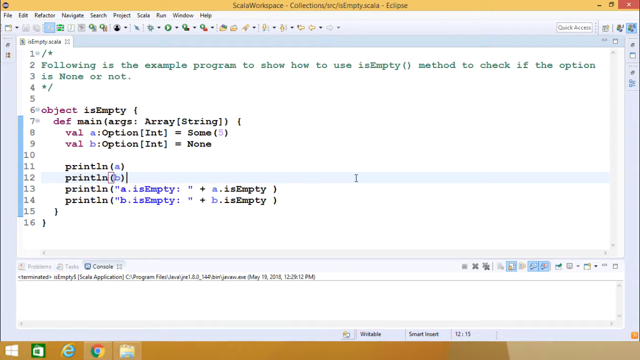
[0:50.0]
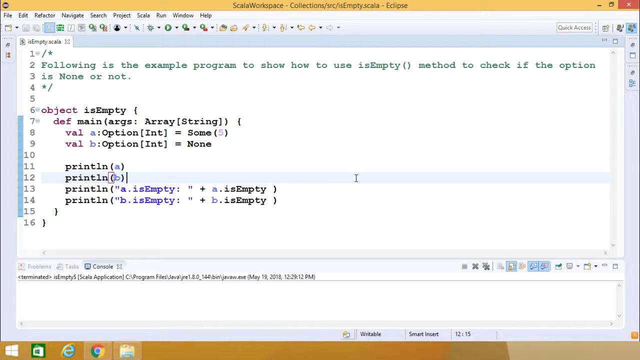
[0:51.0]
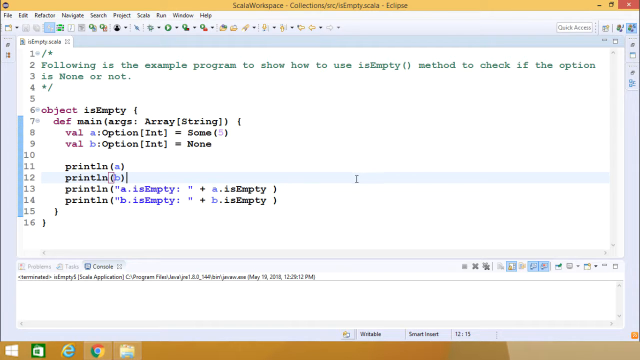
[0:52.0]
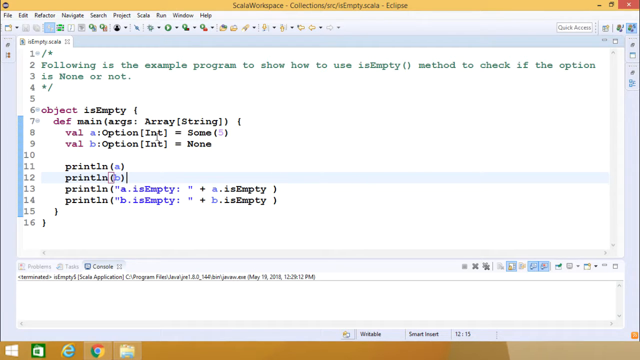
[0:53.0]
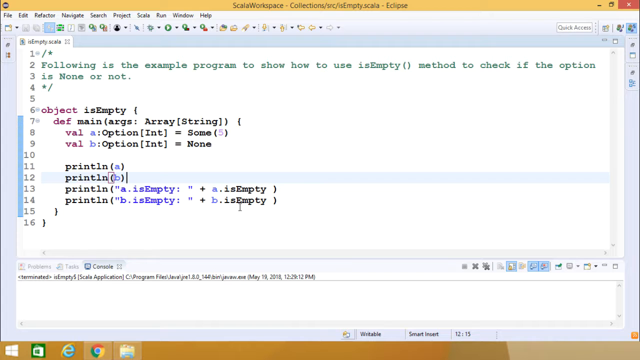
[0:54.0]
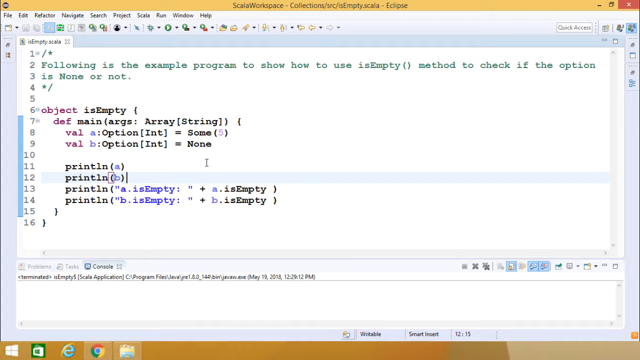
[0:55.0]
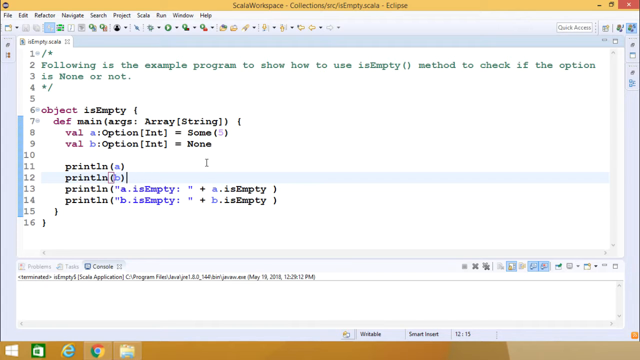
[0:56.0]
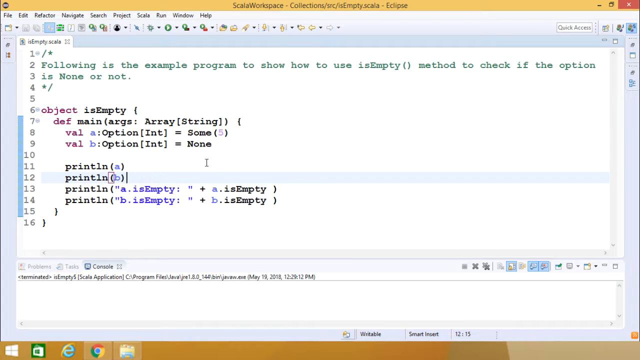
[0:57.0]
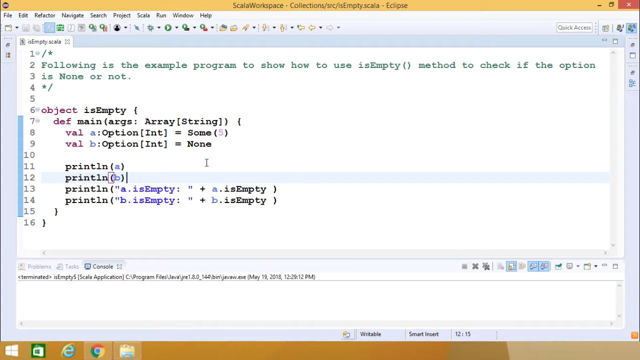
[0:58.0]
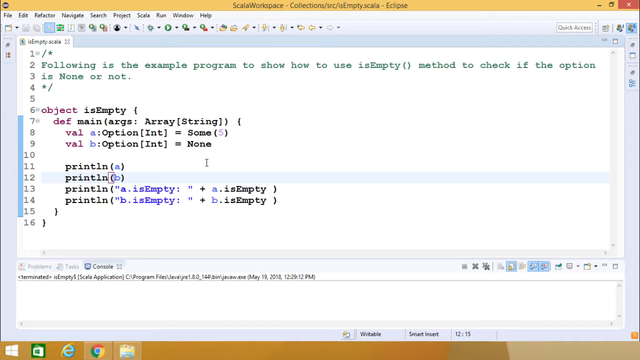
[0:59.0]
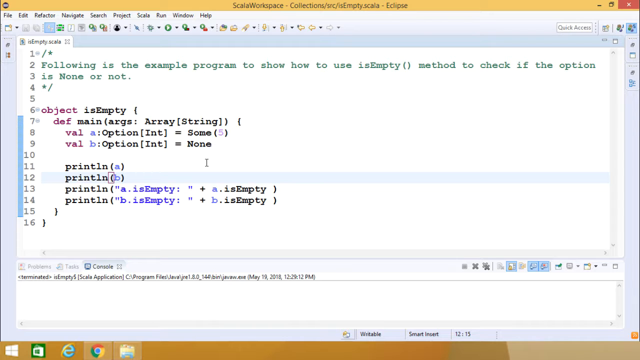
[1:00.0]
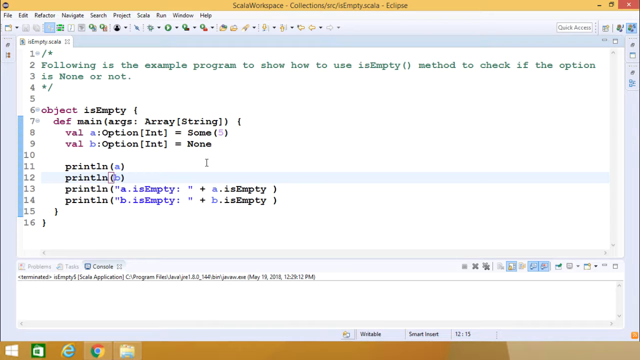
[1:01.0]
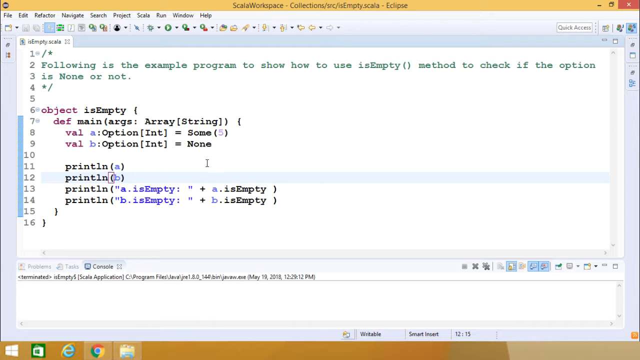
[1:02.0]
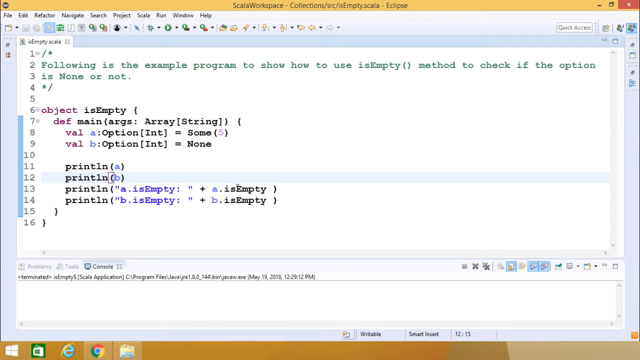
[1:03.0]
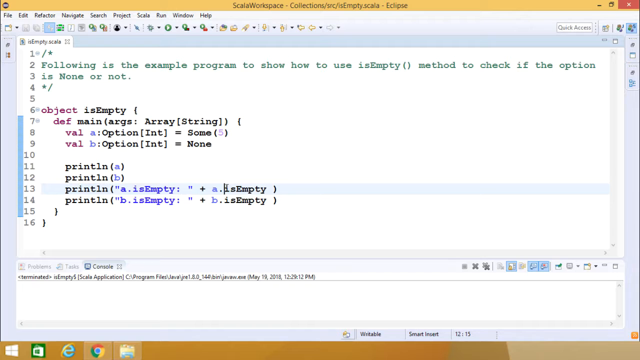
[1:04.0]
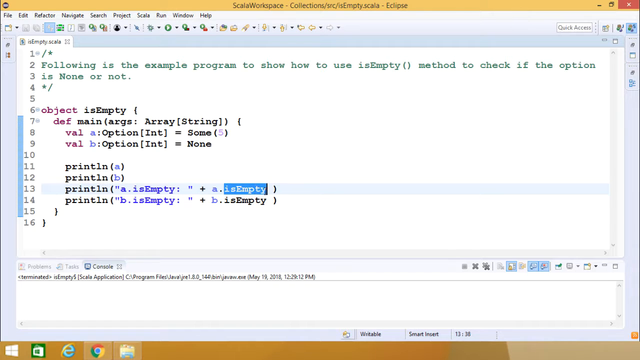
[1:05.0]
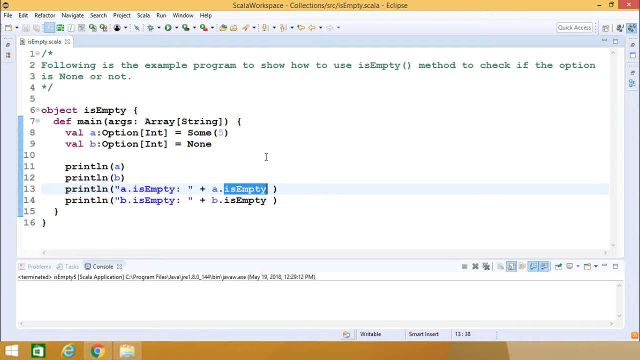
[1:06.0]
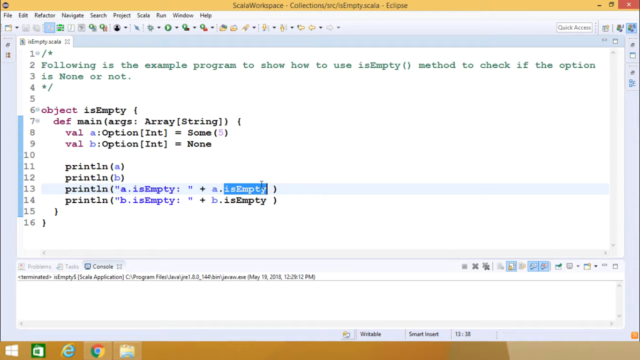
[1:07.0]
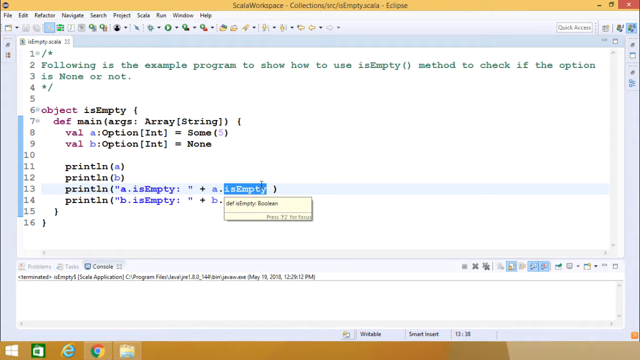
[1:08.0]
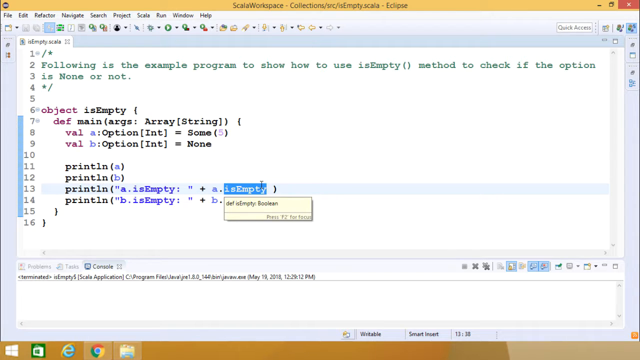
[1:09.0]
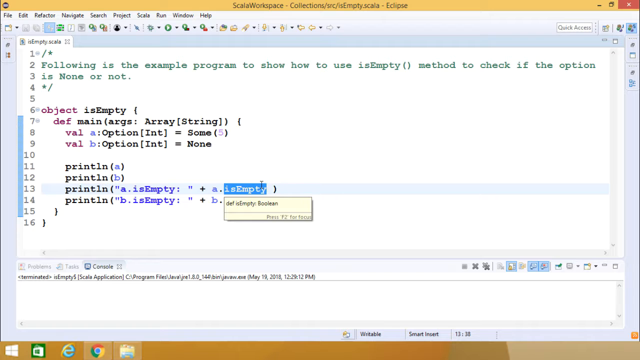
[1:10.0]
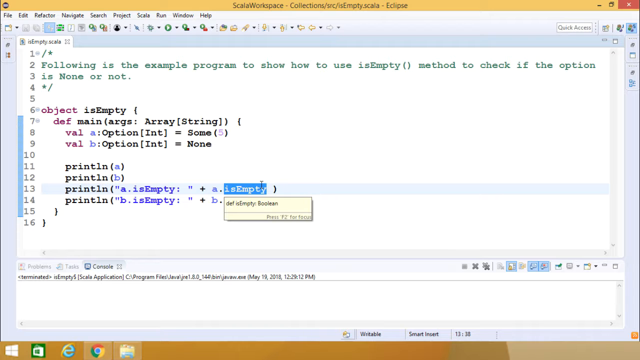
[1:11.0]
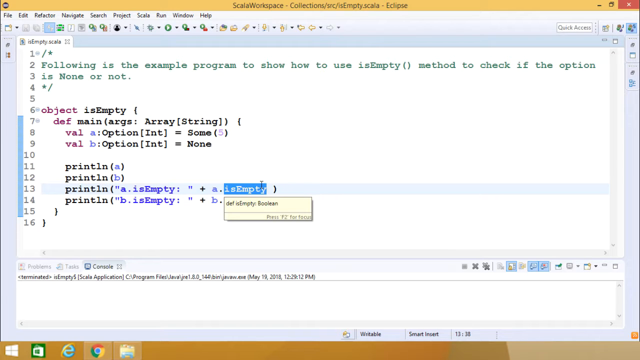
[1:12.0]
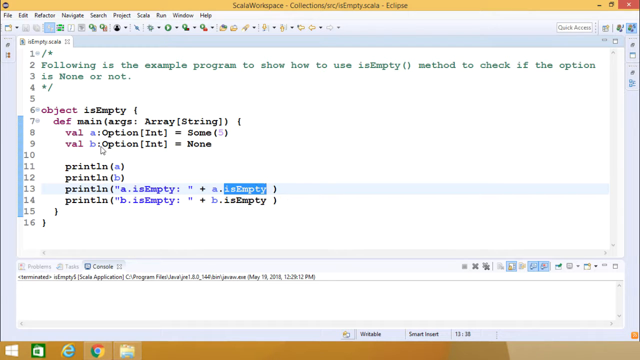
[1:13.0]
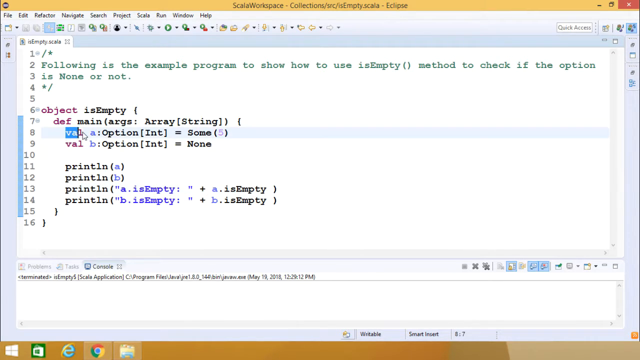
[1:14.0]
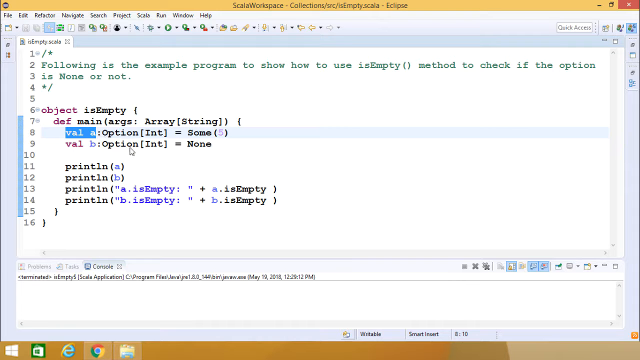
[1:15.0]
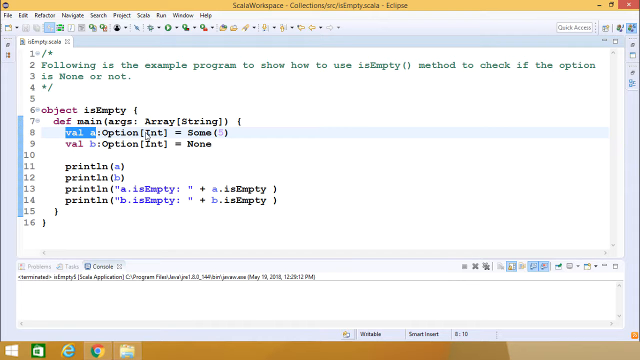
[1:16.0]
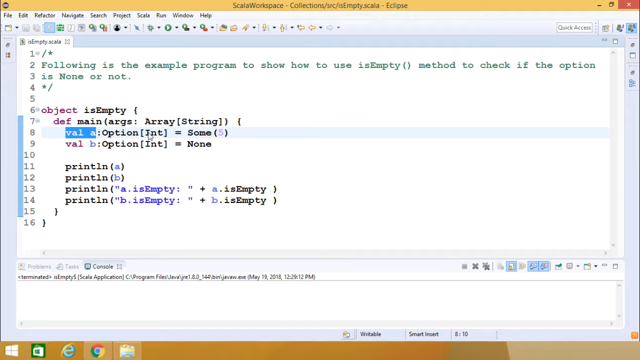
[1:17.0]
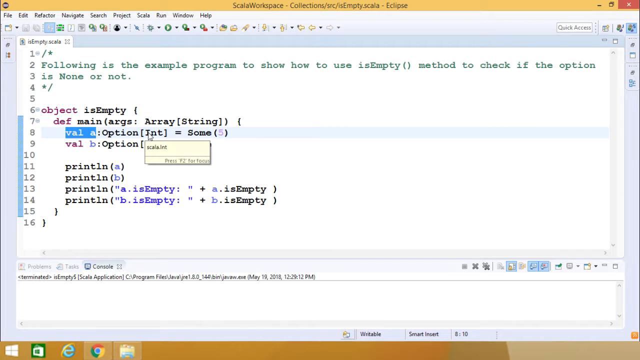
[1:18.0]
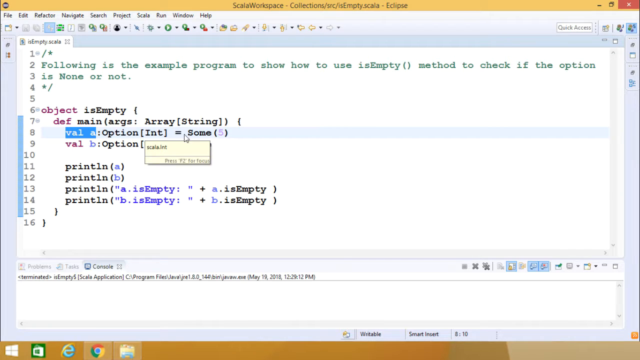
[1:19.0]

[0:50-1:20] A text editor is open with many lines of code, running from line 1 down to line 16. Lines 2 and 3 read "following is the example program to show how to use is empty method to check if the option is none or not". Line 4 has an asterisk and a forward slash, line 5 is empty, and the code begins on line 6, which reads "object is empty". The software is the Scala Workplace, and the code appears to be collections code. Below the lines of code, a console tab is open in the lower part of the editor, possibly for running the code once it is typed out.